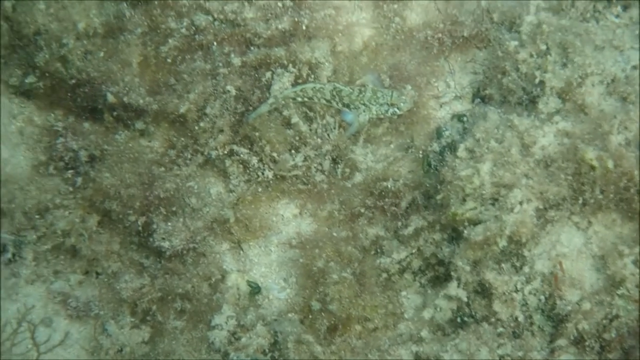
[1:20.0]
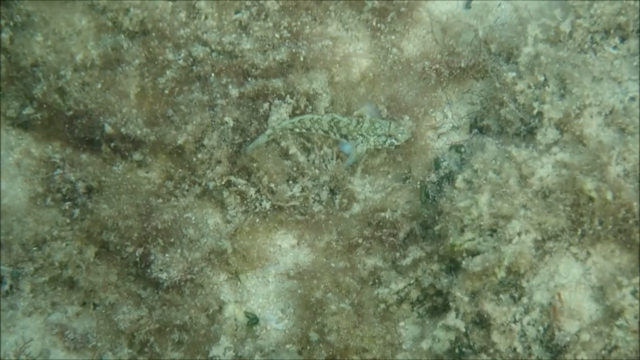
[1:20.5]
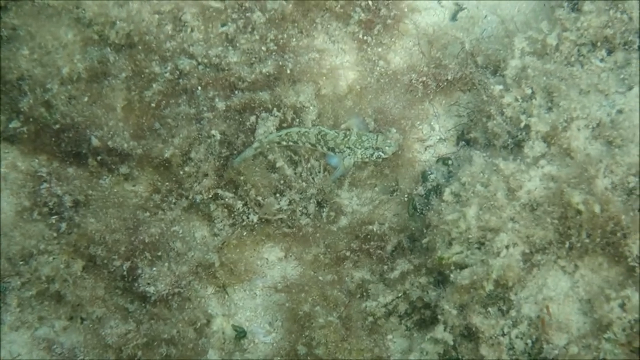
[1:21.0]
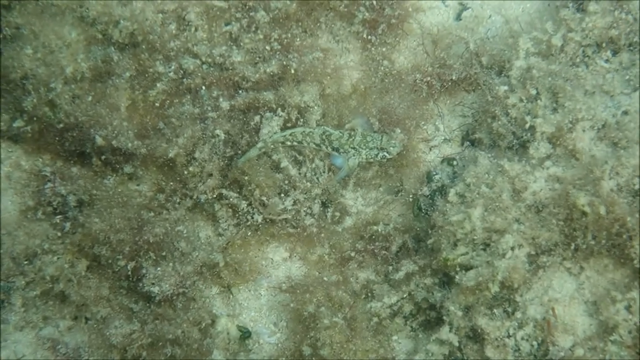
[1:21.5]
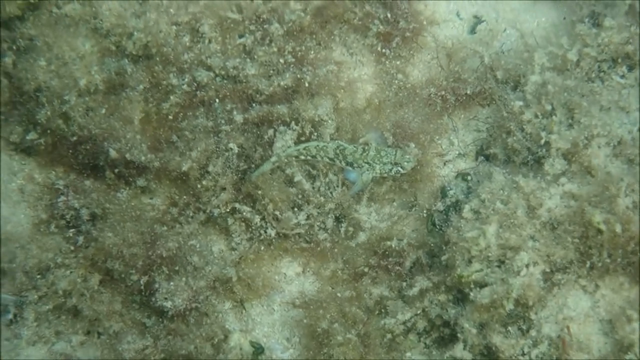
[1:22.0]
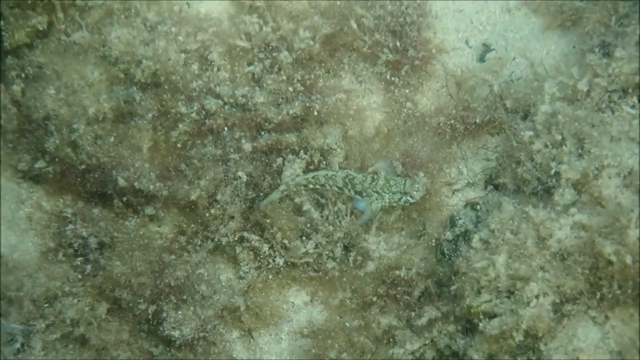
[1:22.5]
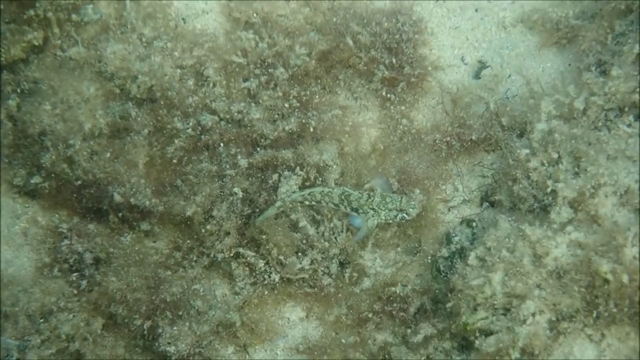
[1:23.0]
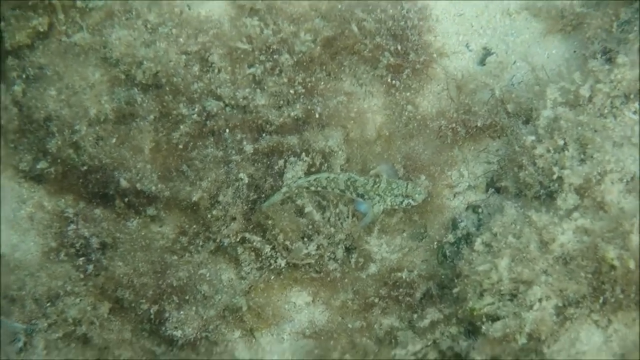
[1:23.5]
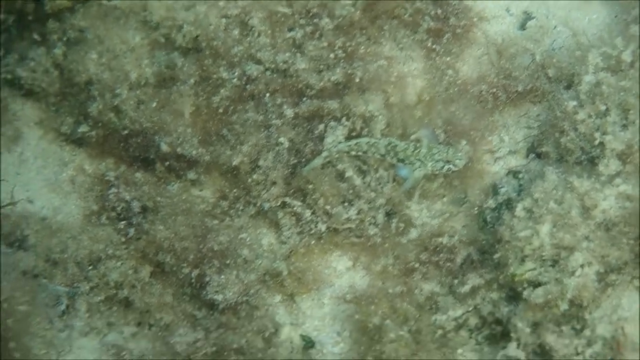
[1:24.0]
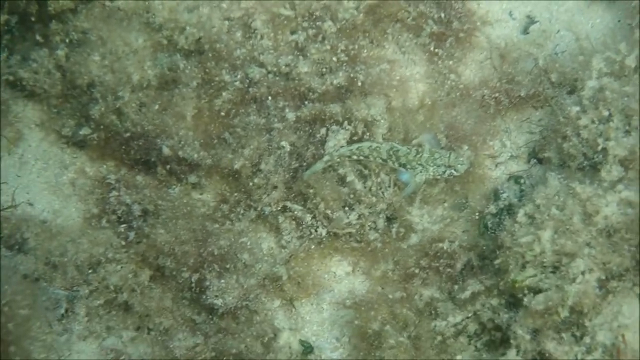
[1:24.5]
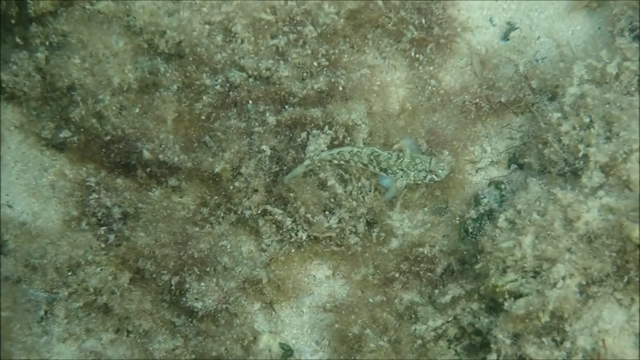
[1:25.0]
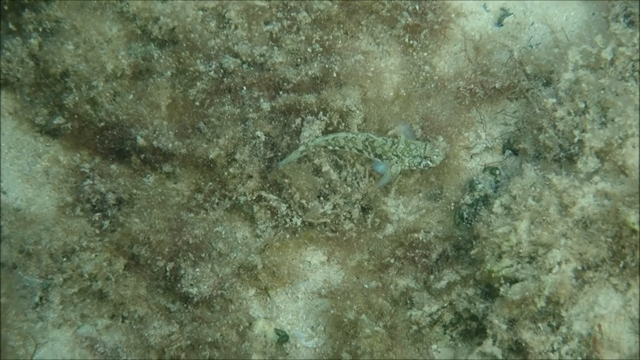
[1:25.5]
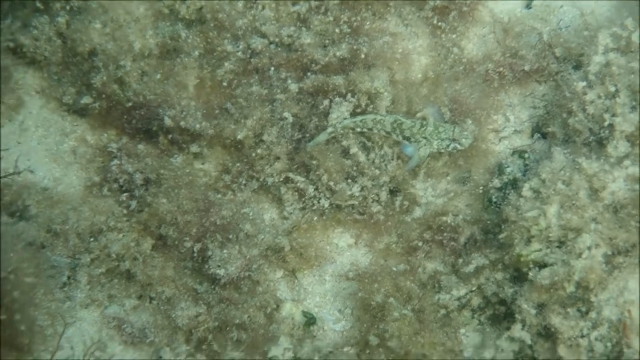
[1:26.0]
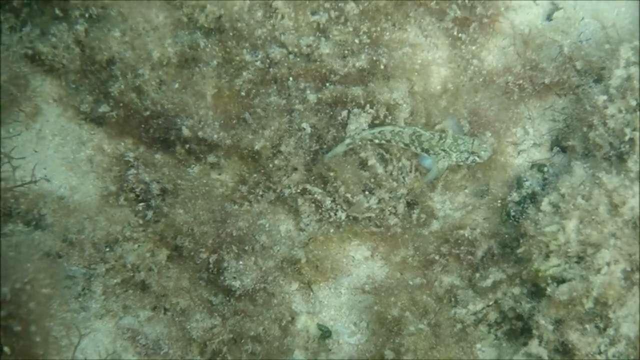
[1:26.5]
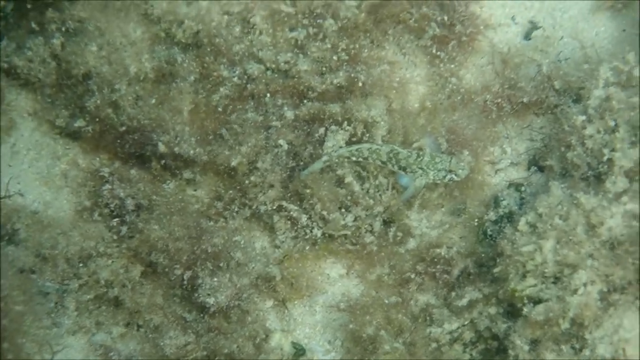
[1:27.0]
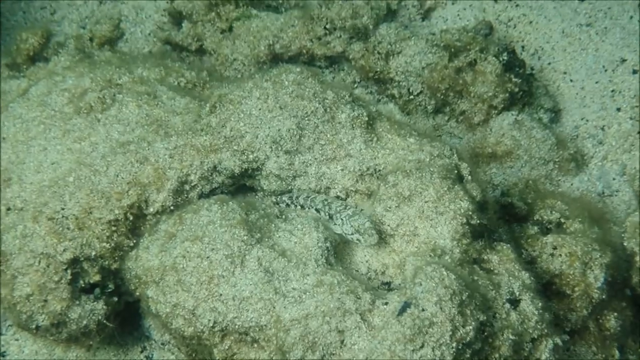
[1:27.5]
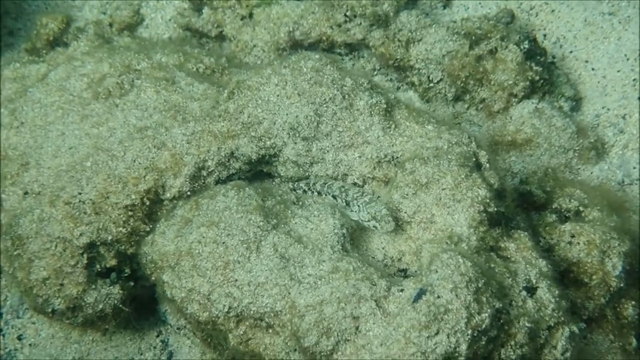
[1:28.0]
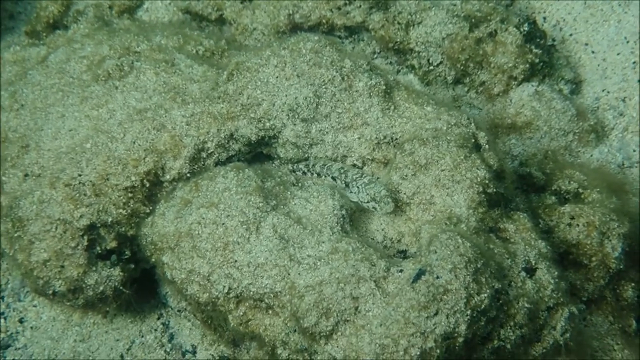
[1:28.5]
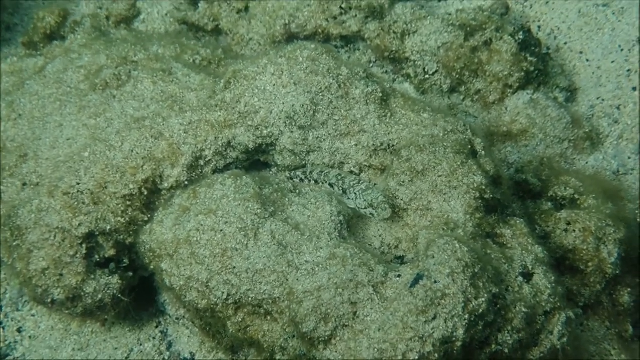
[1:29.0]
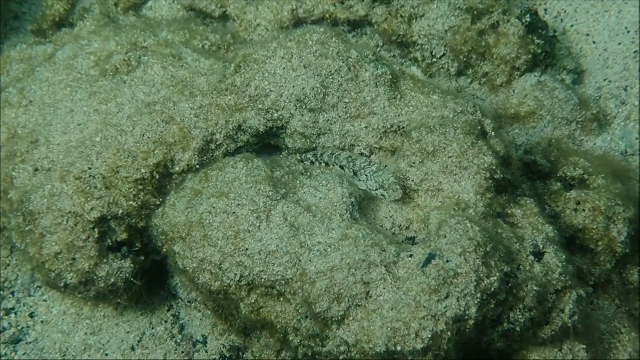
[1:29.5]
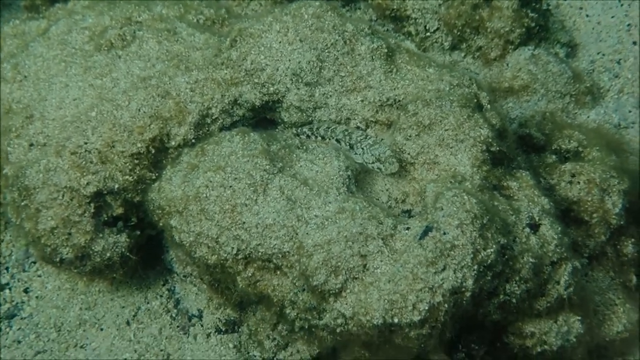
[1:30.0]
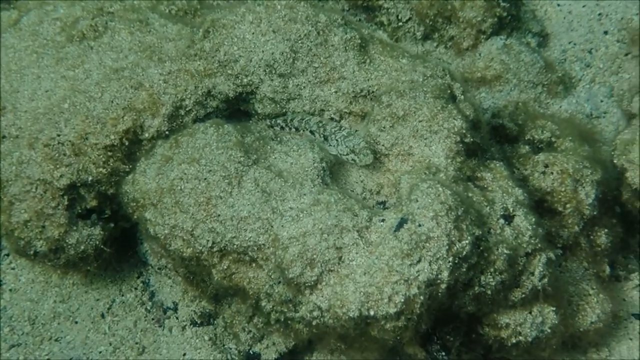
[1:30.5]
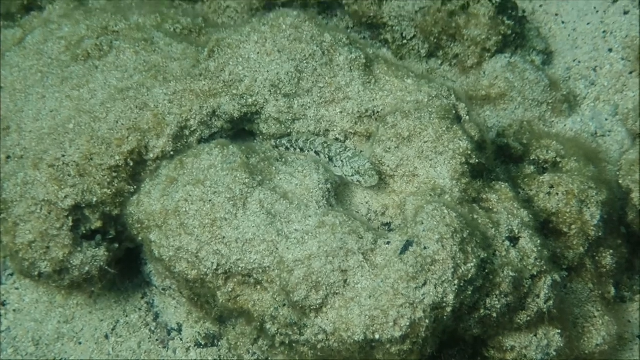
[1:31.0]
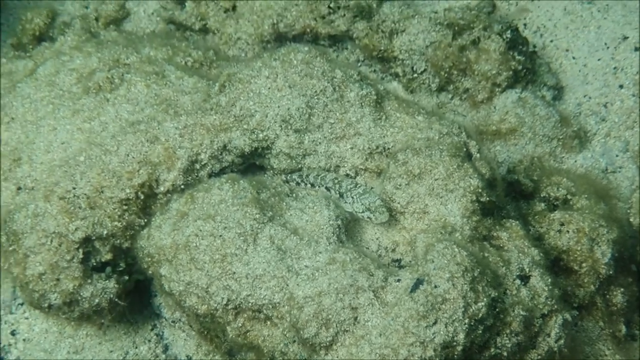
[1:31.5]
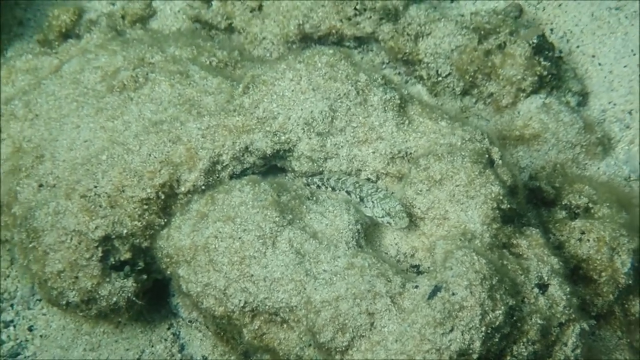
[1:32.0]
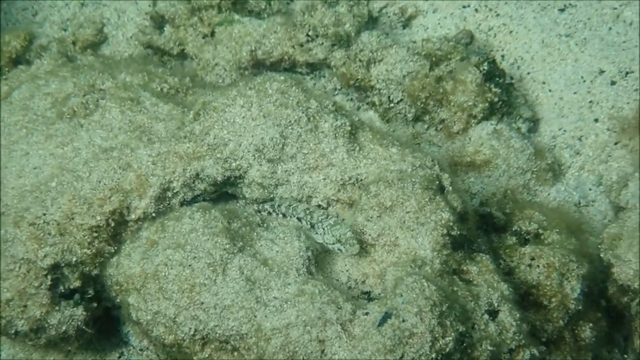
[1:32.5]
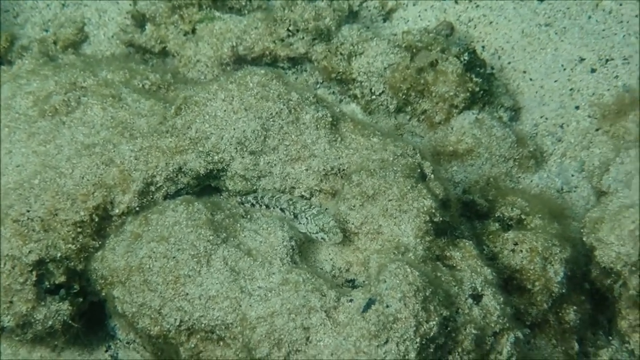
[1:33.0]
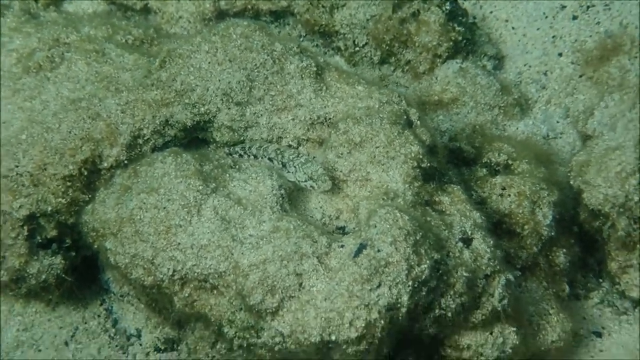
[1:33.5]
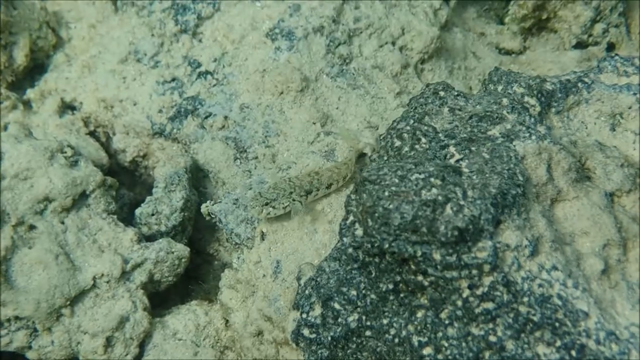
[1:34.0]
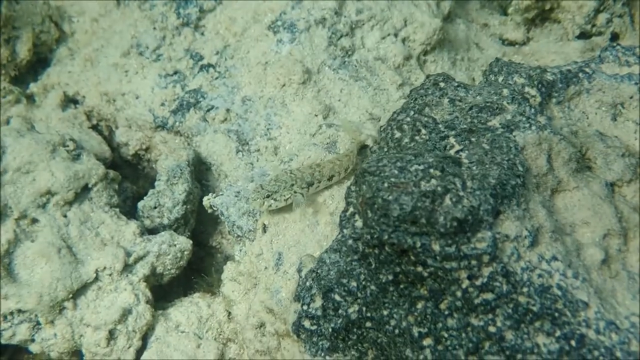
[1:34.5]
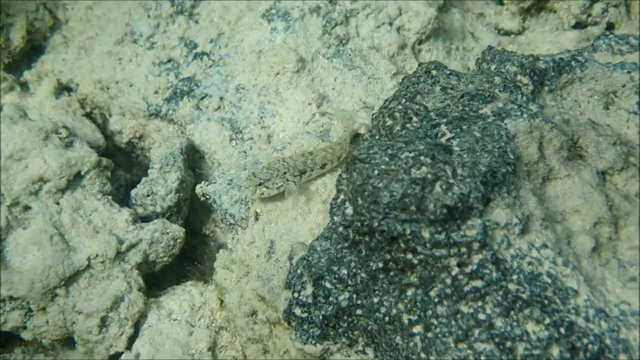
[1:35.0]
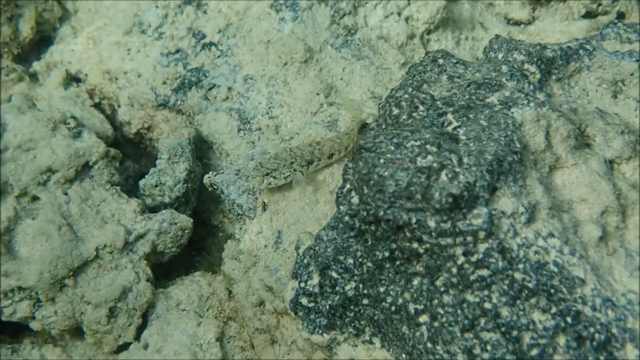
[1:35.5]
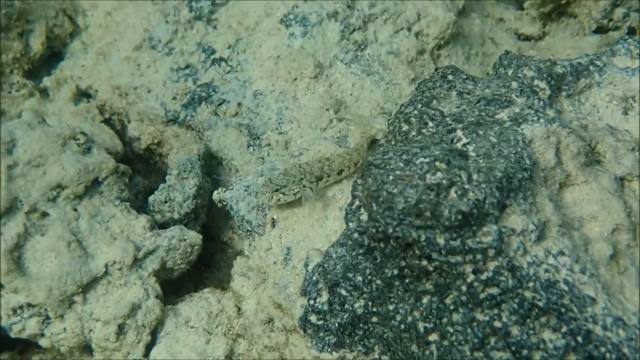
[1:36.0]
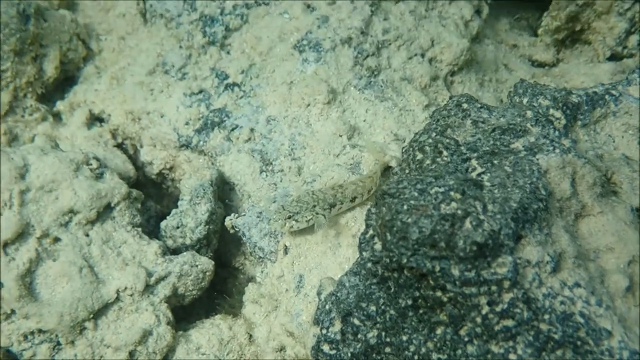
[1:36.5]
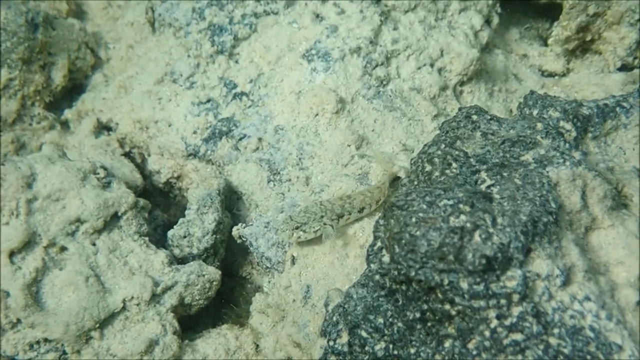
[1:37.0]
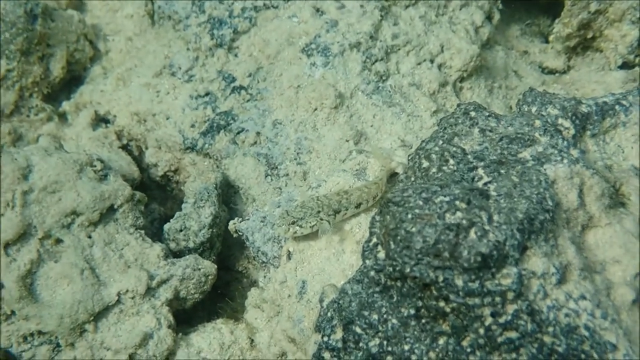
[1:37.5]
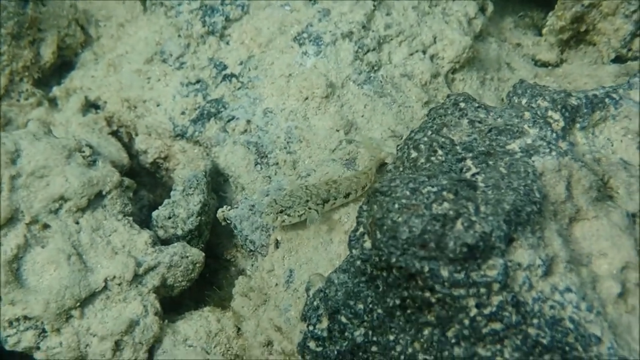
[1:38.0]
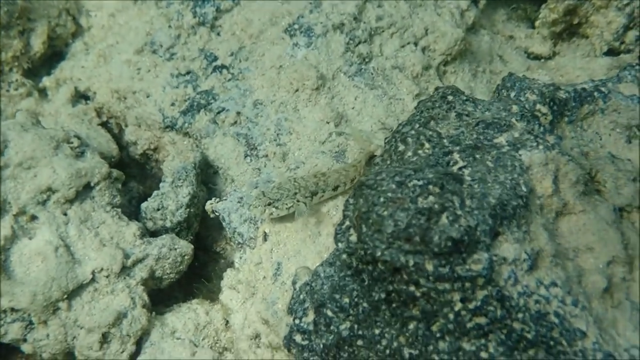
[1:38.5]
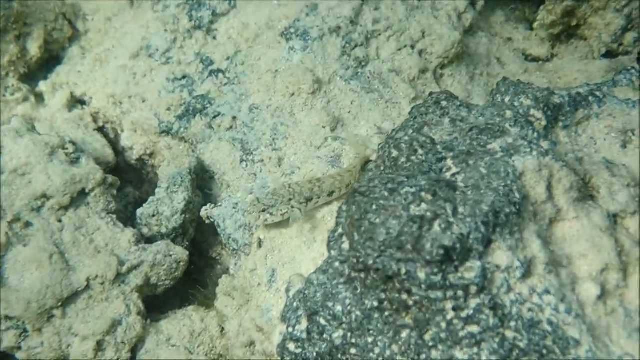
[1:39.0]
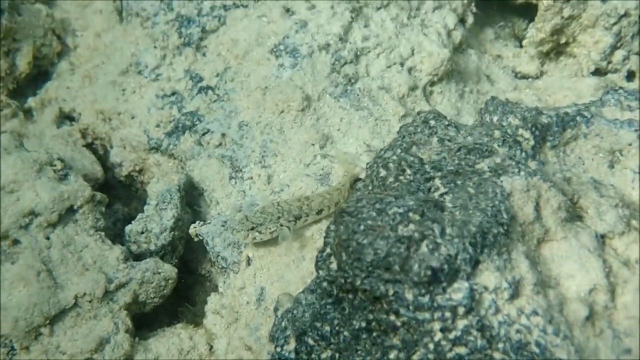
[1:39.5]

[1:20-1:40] An overhead view shows the sand, the rocks, the barnacles and supposedly the fish, but it is so well camouflaged that it cannot be seen and it is unclear whether it is there. The video transitions to a more zoomed-in view of the sand with the fish hiding in it. The sand here is rockier, with a gap in it where the fish is hiding. The fish has the same black and beige color and pattern as before and camouflages very well, since most of its skin is the same color as the sand. Everything is underwater; some waves can be seen making movements, but the water itself is not really visible, as the shot focuses mostly on the fish. The video then transitions to another shot of the fish just lying there, beige and black. A few darker rocks make the fish a bit easier to see; it is near a darker rock but mostly still camouflaged.